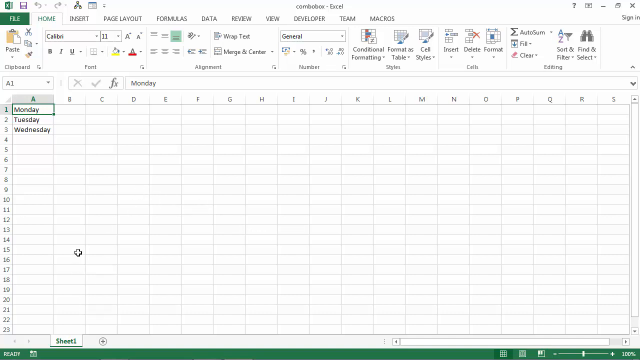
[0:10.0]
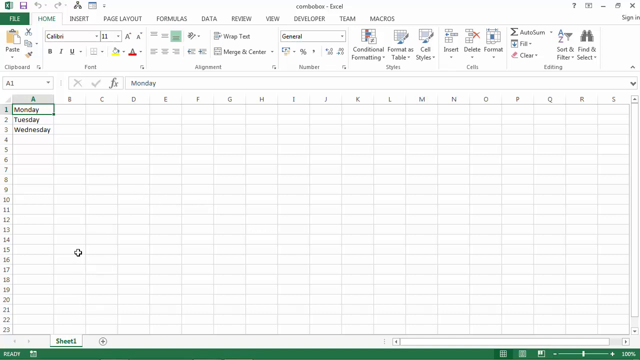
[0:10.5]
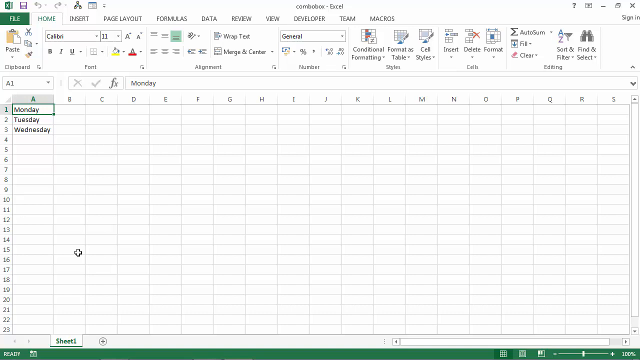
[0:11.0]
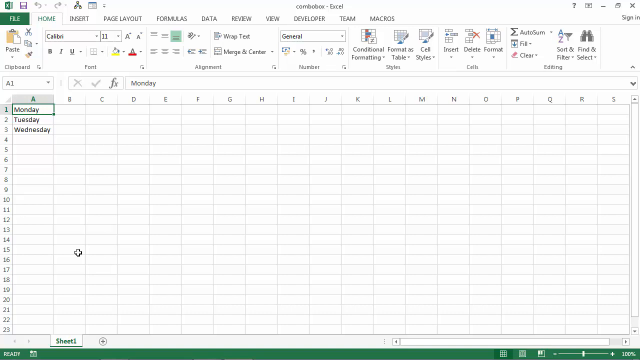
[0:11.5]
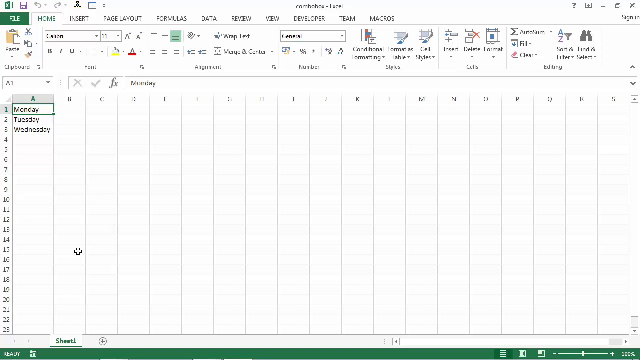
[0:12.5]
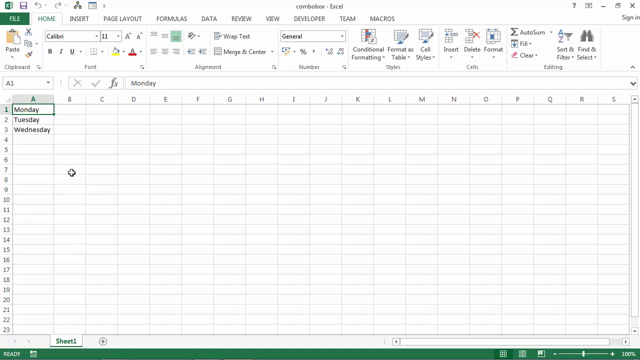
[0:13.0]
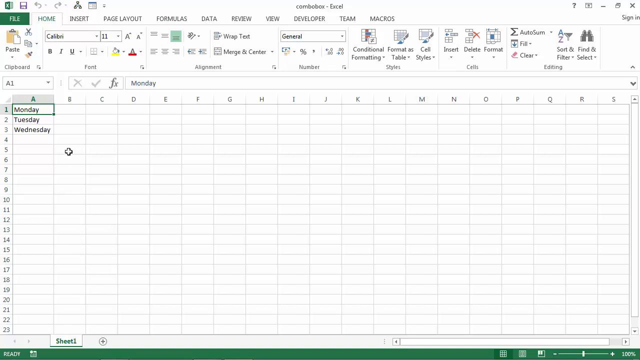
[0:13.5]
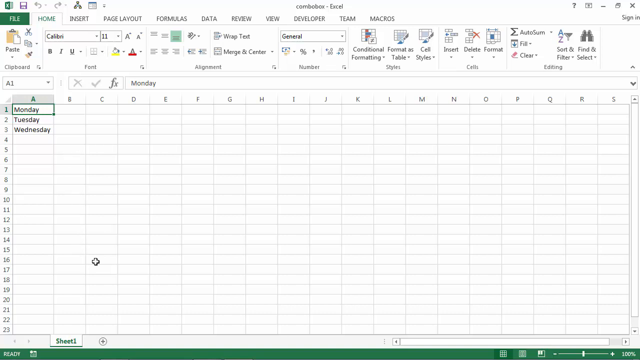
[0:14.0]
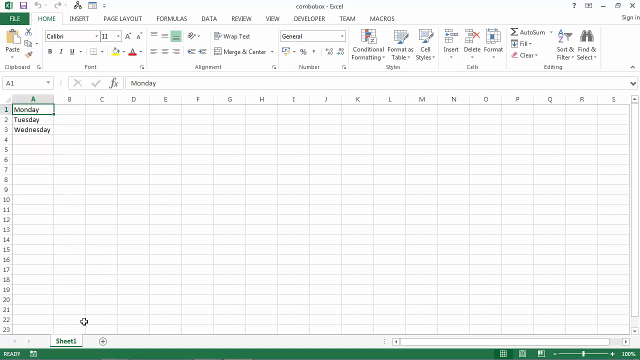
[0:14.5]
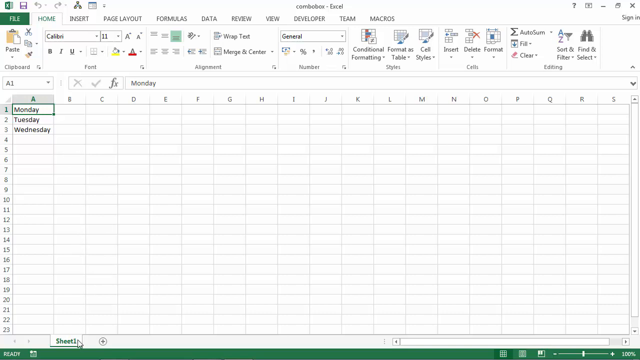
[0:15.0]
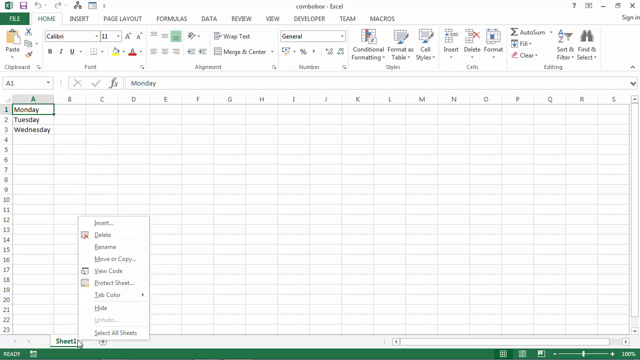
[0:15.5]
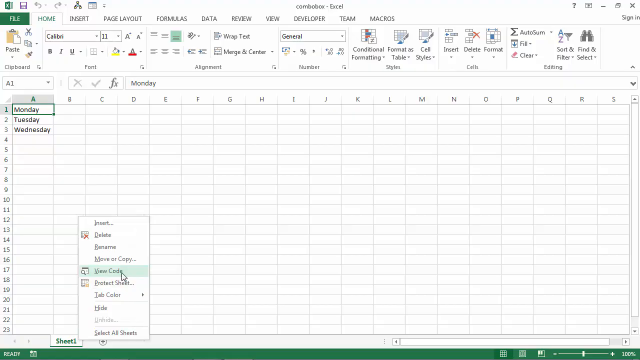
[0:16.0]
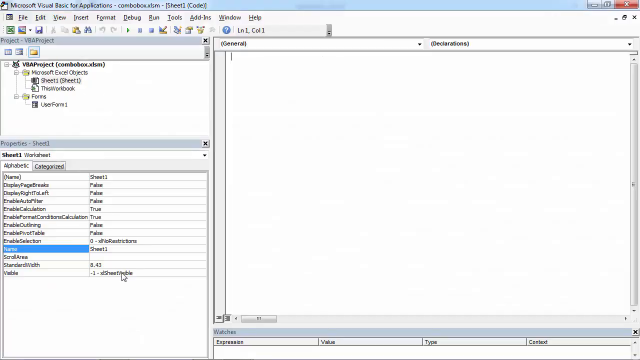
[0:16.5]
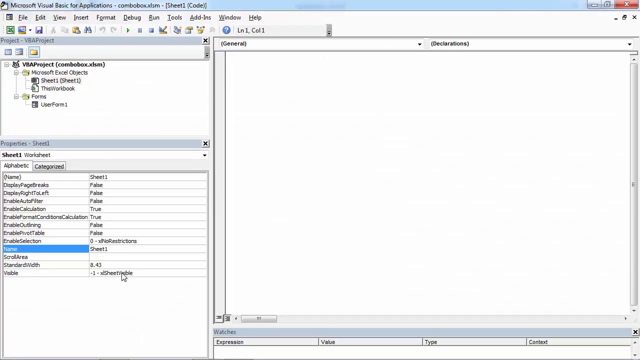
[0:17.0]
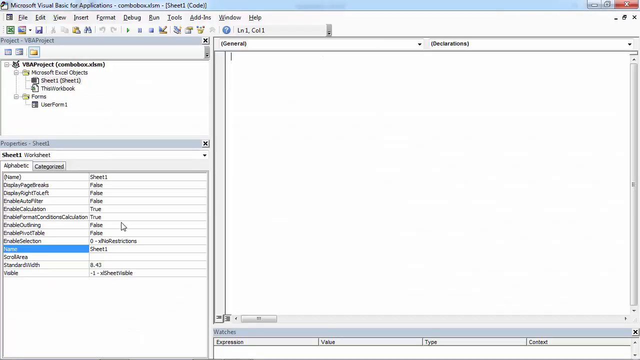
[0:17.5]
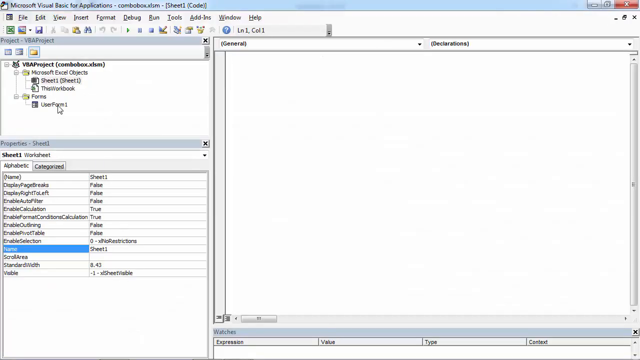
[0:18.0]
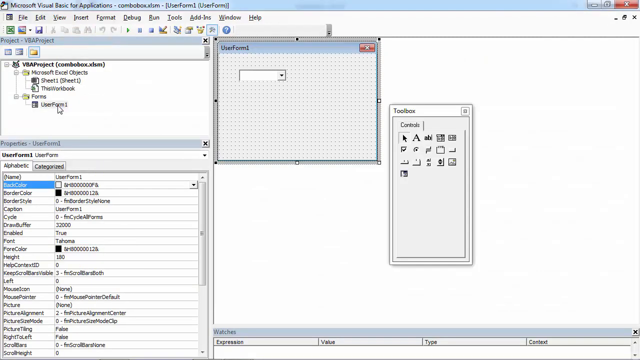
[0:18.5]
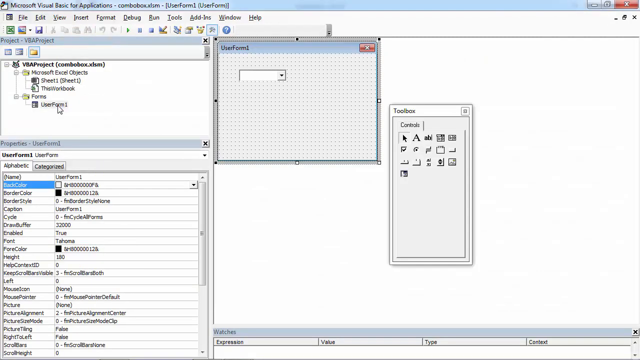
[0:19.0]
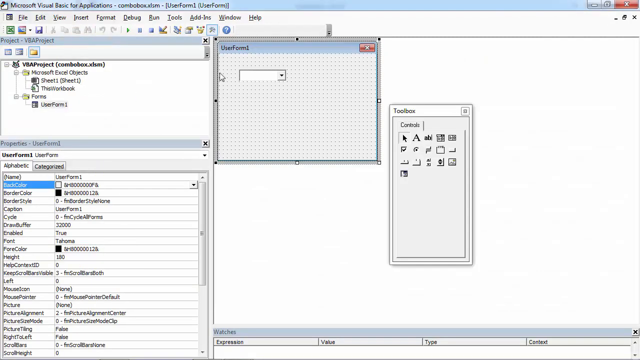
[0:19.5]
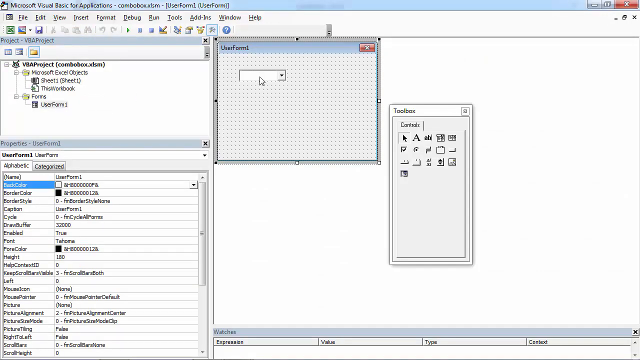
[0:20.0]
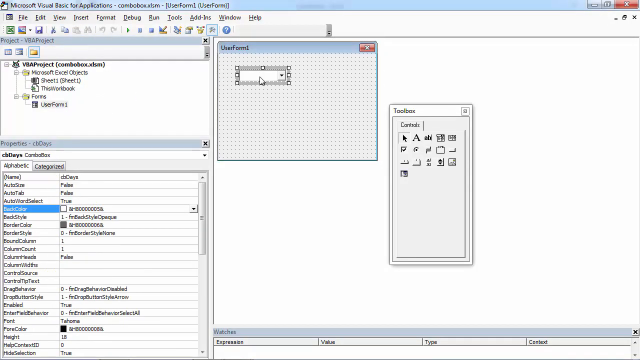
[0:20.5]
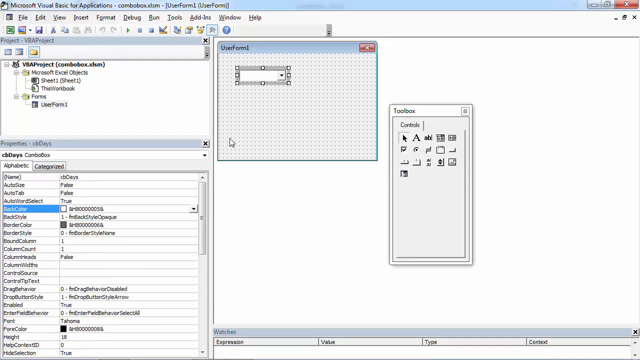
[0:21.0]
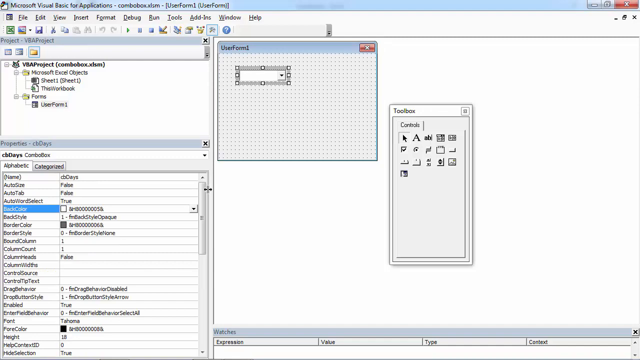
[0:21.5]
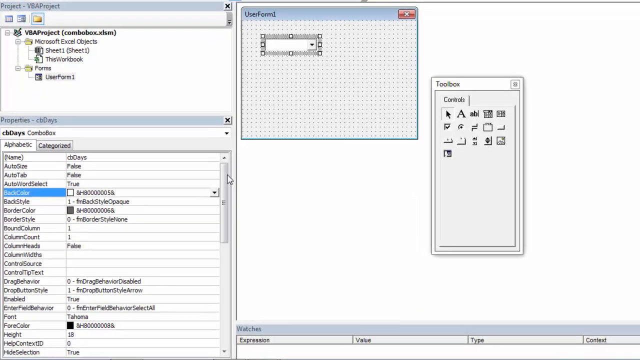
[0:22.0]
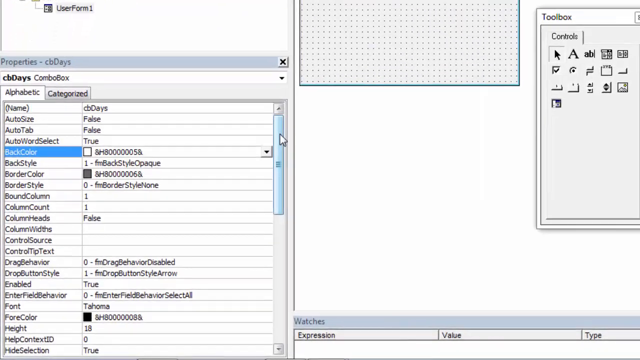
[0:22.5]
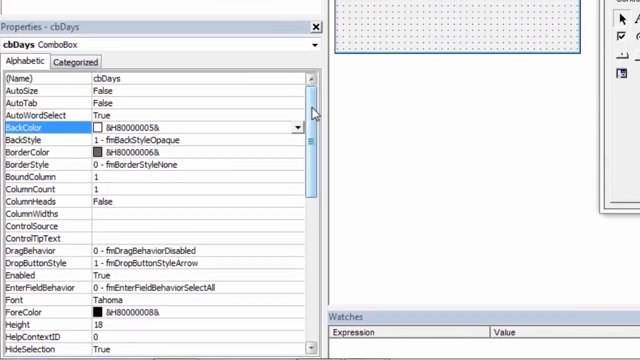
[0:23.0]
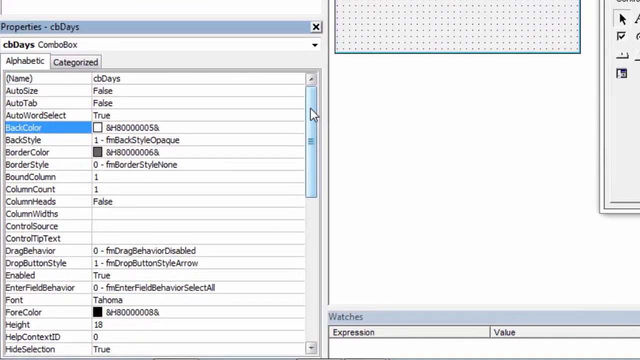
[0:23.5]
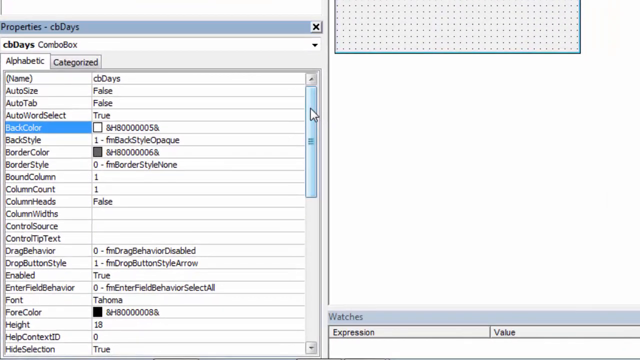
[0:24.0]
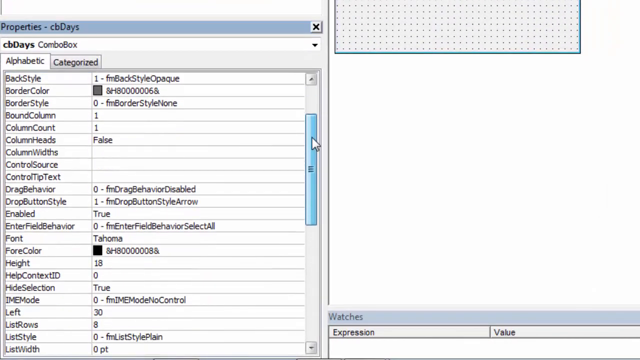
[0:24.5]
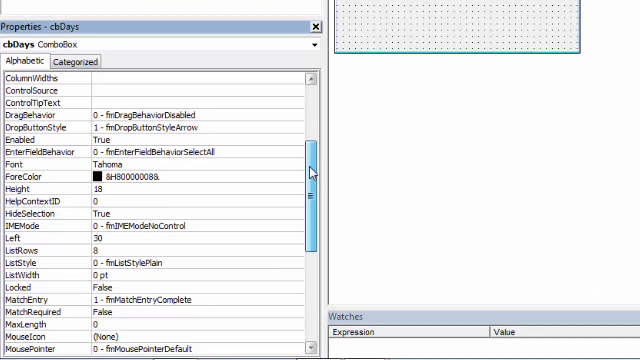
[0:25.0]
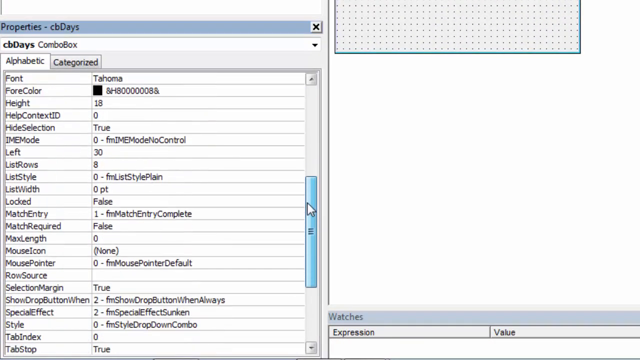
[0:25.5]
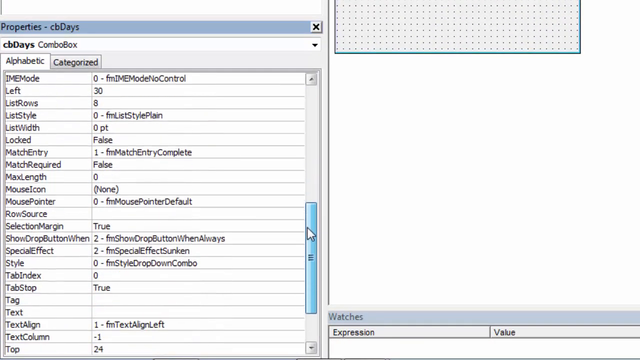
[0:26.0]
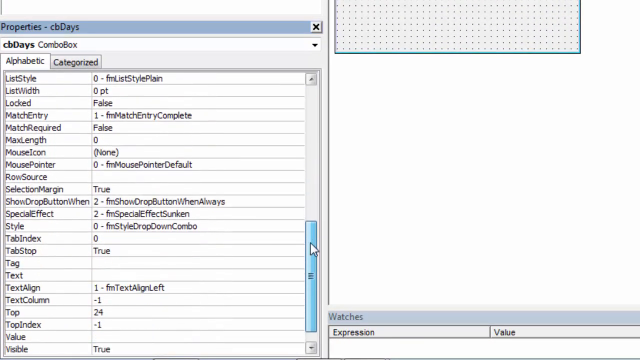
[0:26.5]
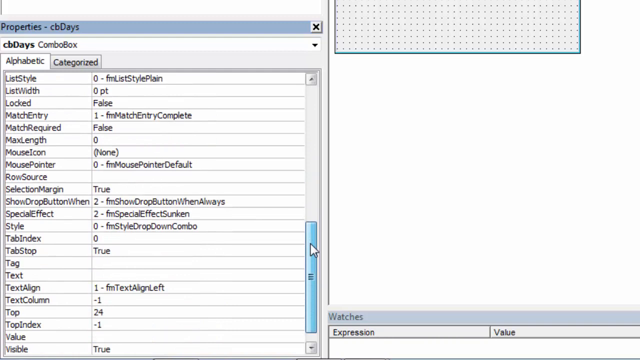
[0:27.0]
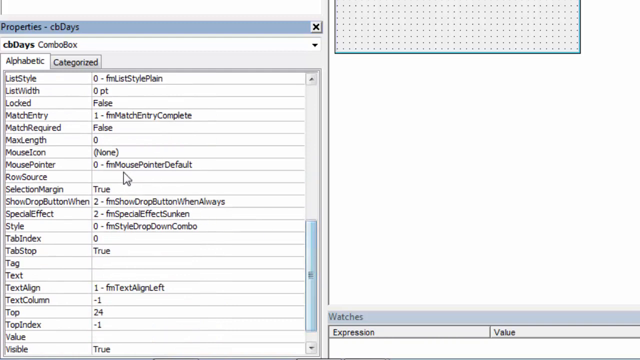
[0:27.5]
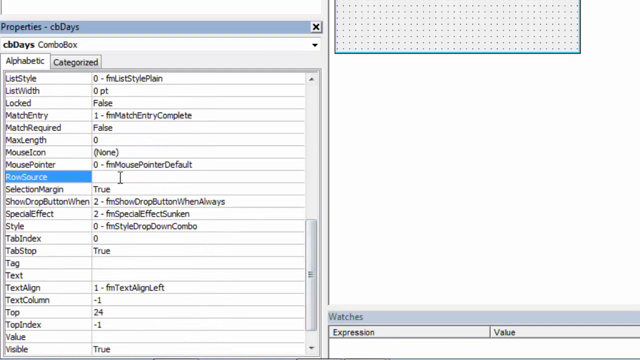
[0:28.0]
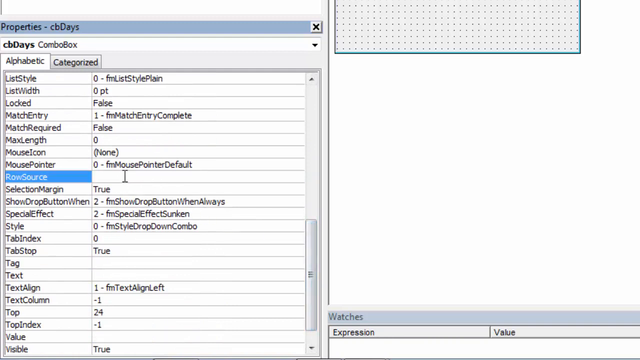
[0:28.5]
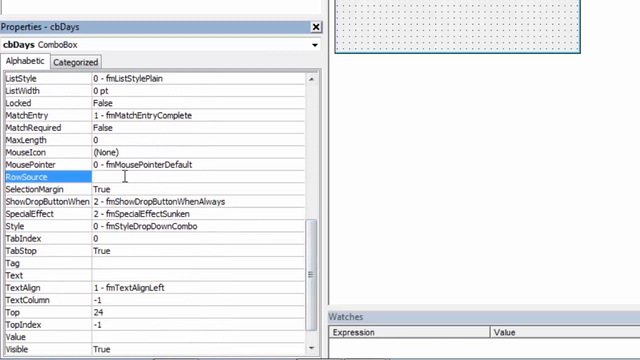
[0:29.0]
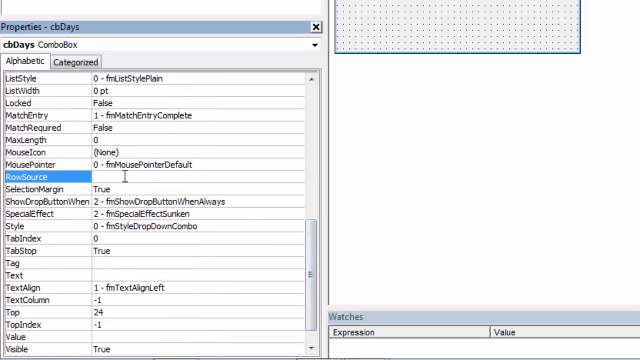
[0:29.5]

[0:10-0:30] The user selects Sheet 1 near the bottom left, which opens a menu with Insert, Delete, Rename, Move or Copy, View Code, Protect Sheet, Tab Color and Hide. He clicks View Code, and a new interface appears with a menu reading File, Edit, View, Insert, Format, Debug, Run, Tools, Add-ins, Windows and Help. He then selects User Format, scrolls down and selects Resource, apparently to add a resource. The page displays Microsoft Excel.